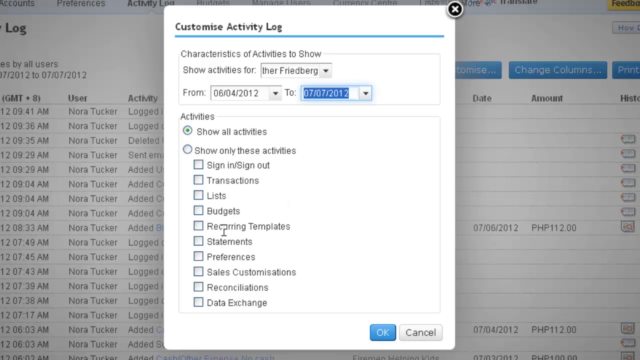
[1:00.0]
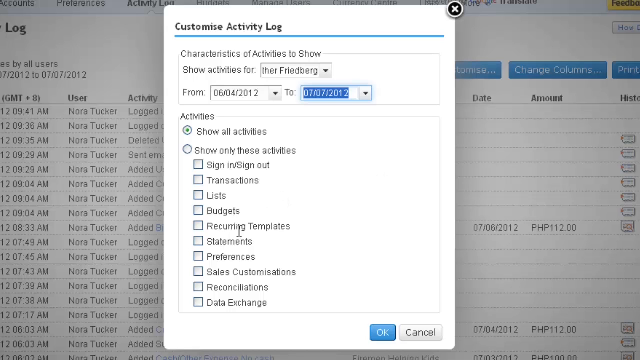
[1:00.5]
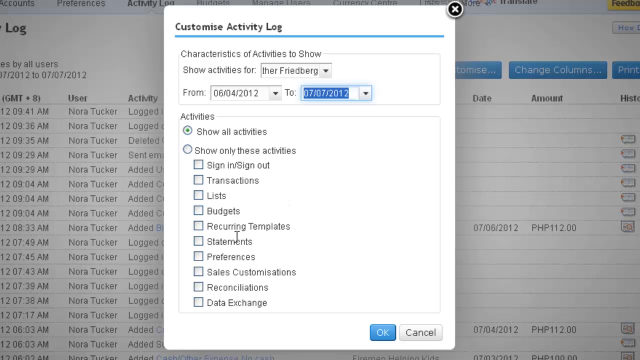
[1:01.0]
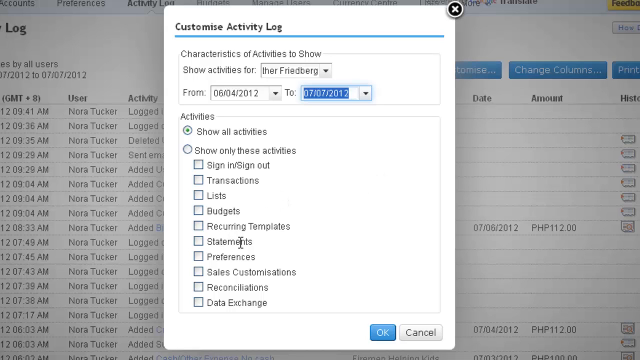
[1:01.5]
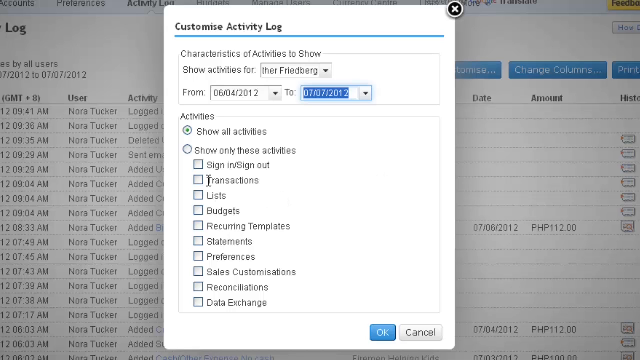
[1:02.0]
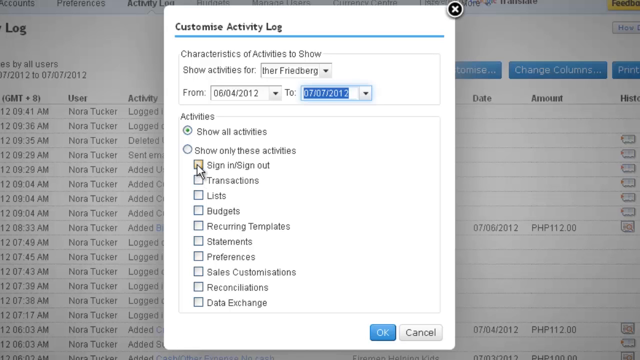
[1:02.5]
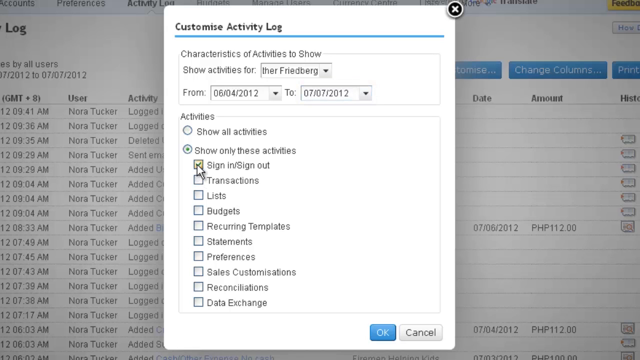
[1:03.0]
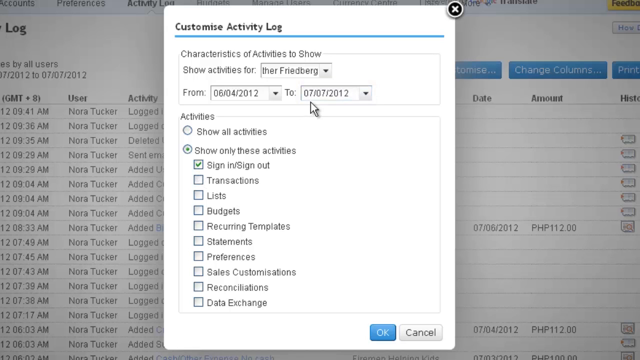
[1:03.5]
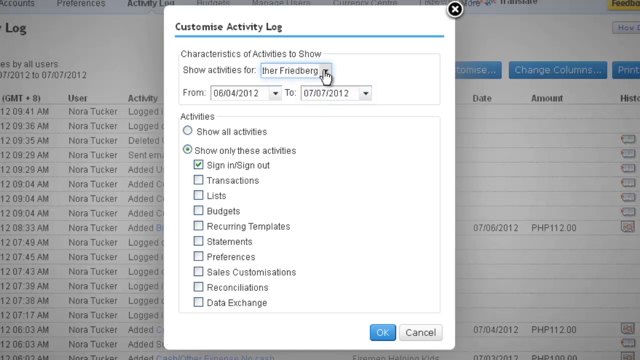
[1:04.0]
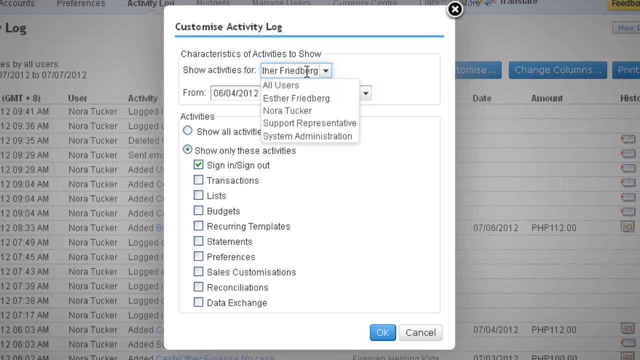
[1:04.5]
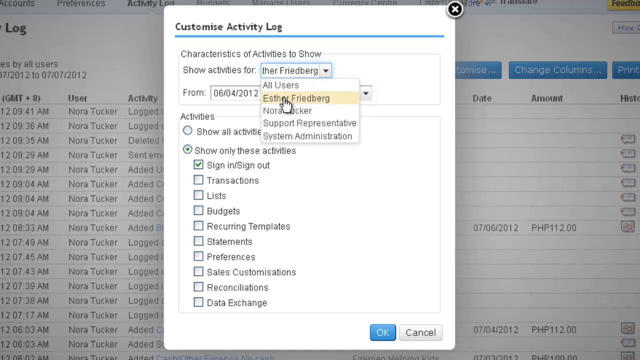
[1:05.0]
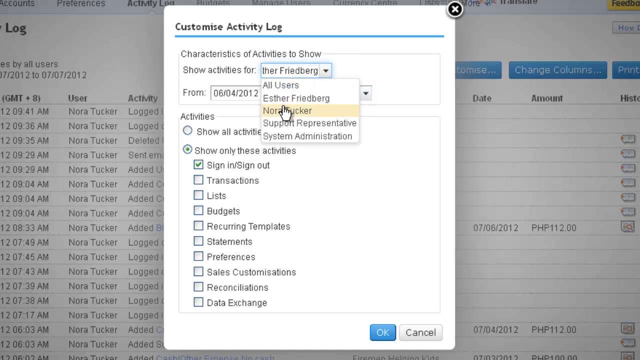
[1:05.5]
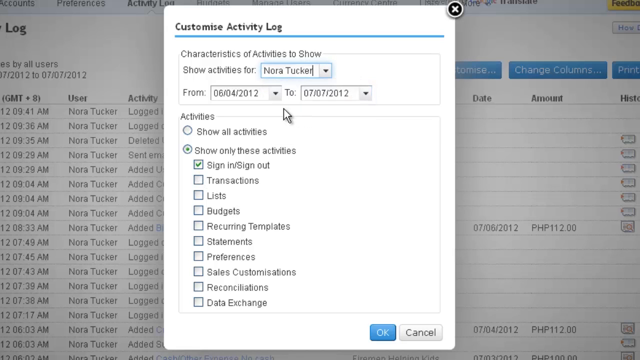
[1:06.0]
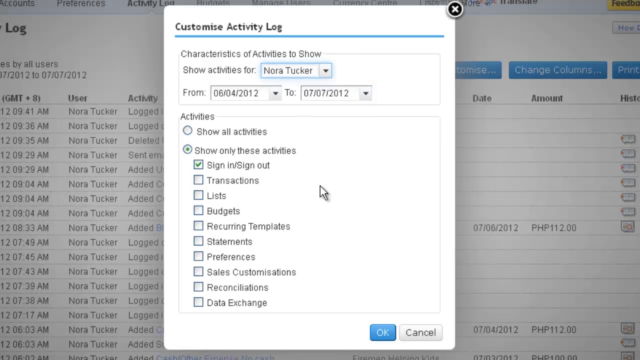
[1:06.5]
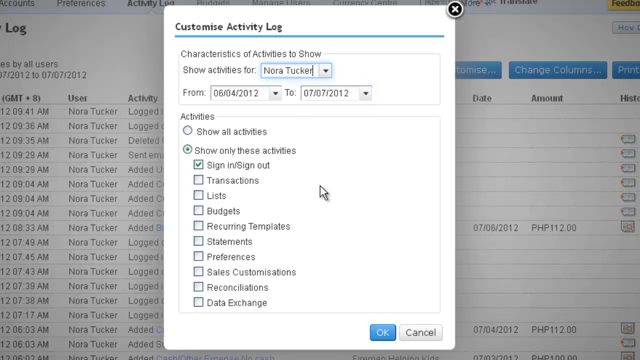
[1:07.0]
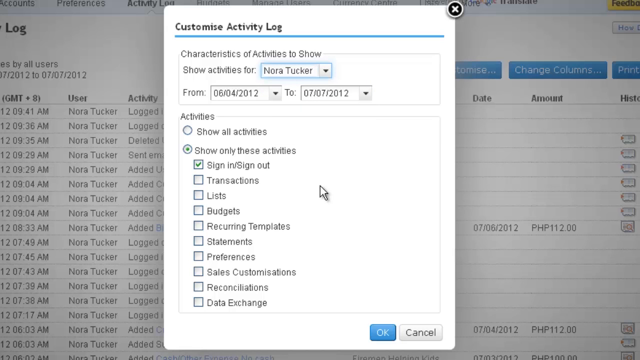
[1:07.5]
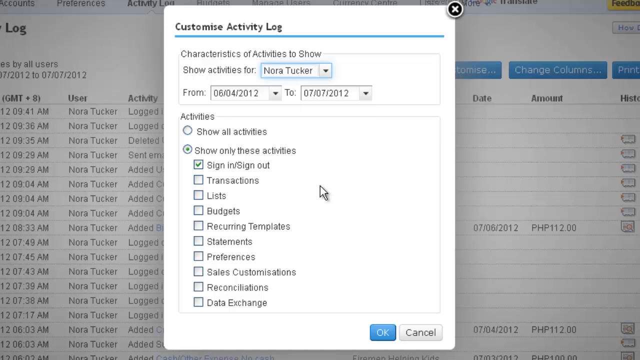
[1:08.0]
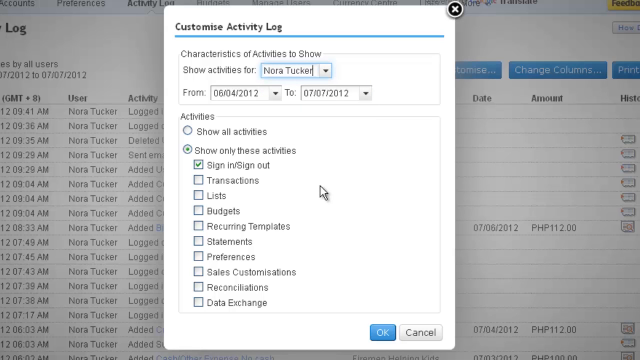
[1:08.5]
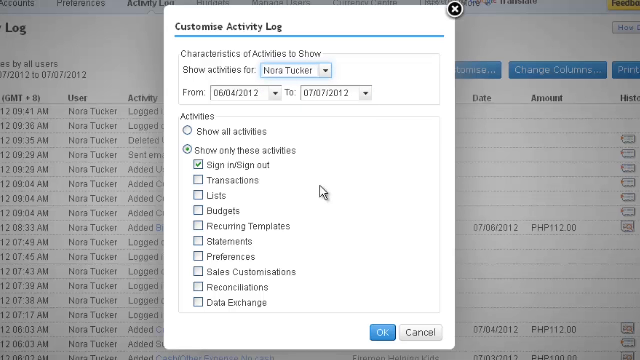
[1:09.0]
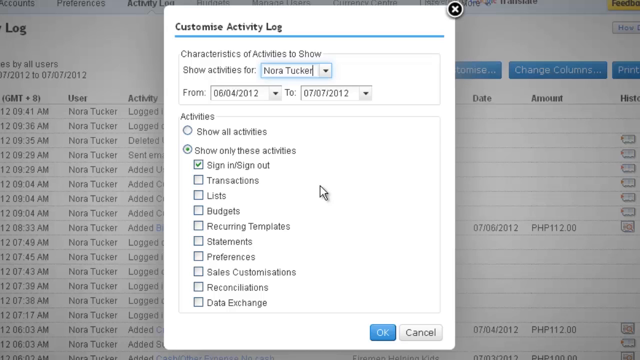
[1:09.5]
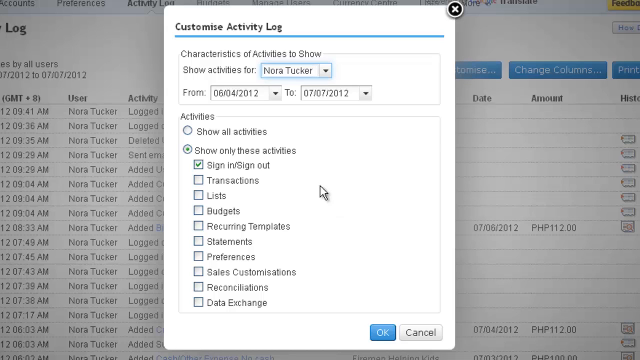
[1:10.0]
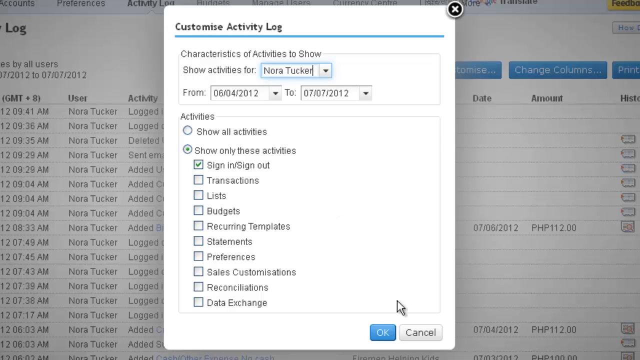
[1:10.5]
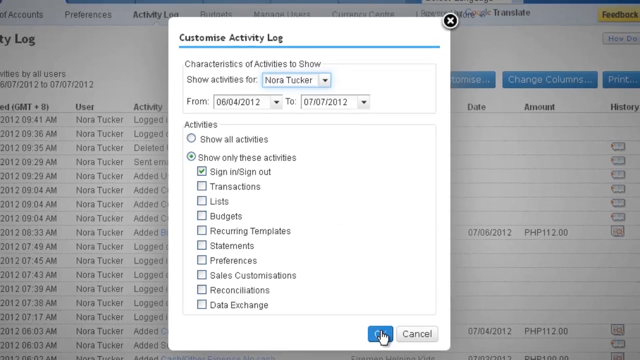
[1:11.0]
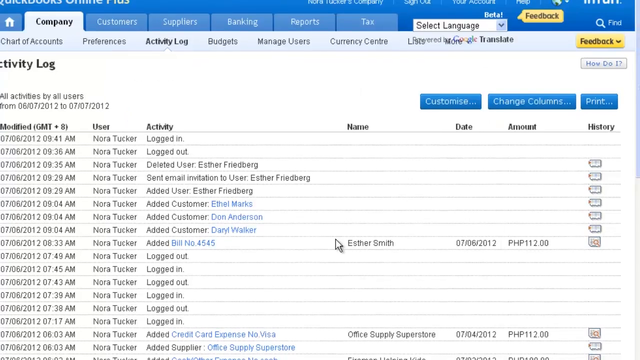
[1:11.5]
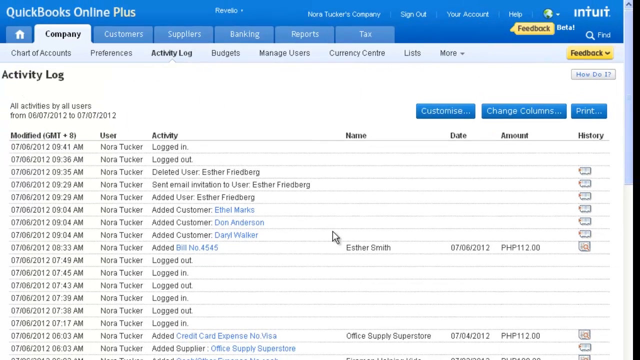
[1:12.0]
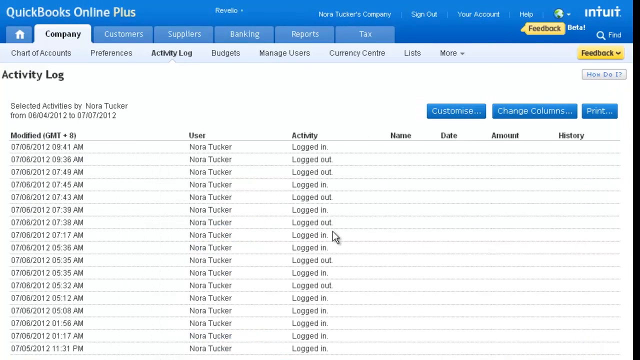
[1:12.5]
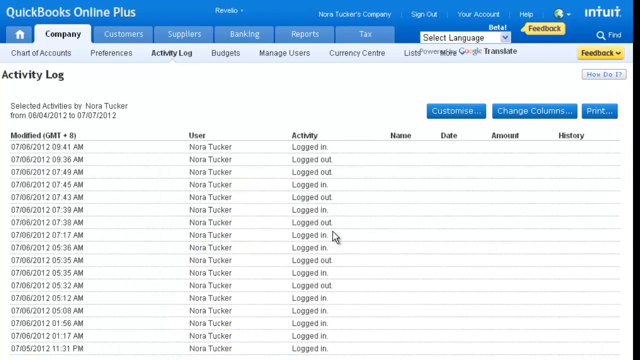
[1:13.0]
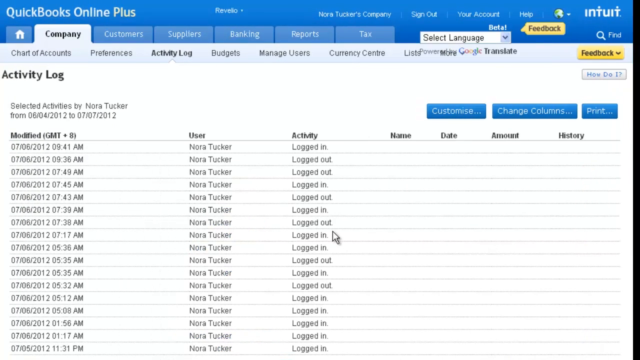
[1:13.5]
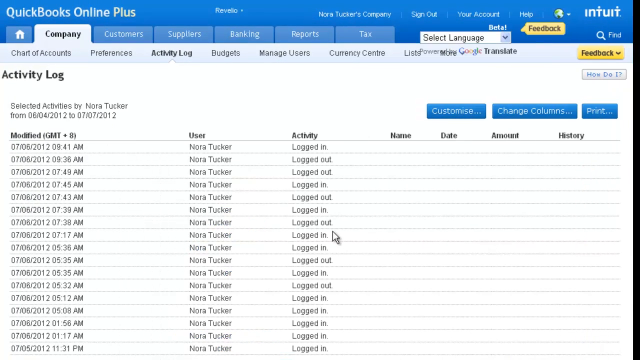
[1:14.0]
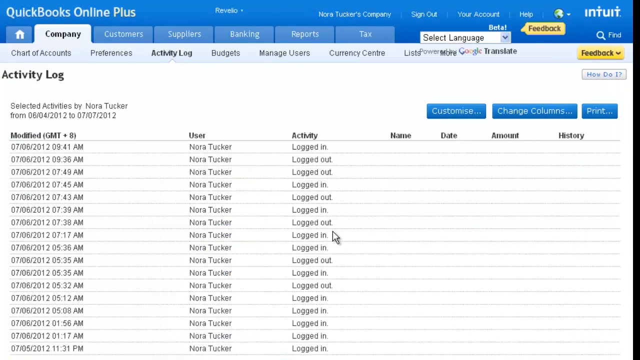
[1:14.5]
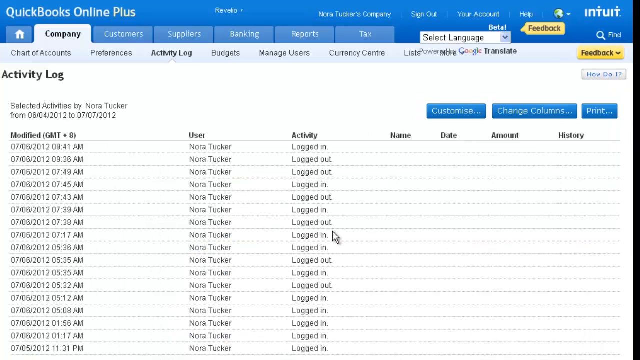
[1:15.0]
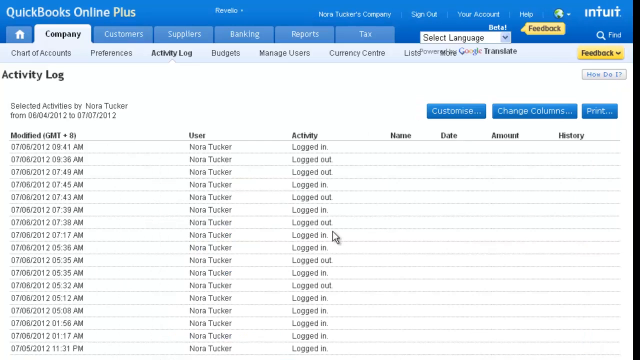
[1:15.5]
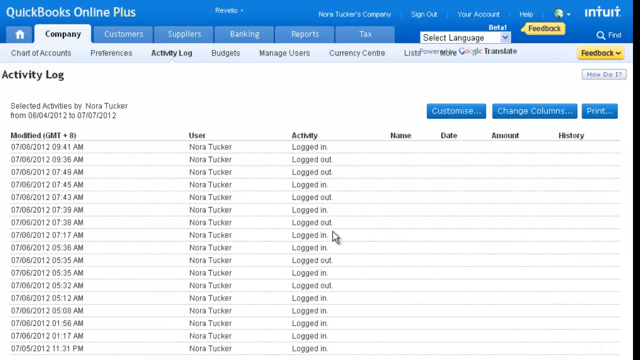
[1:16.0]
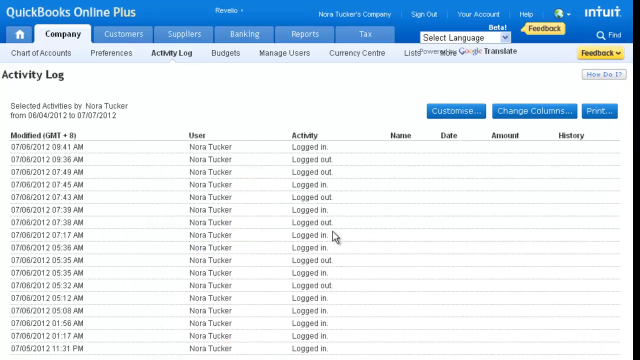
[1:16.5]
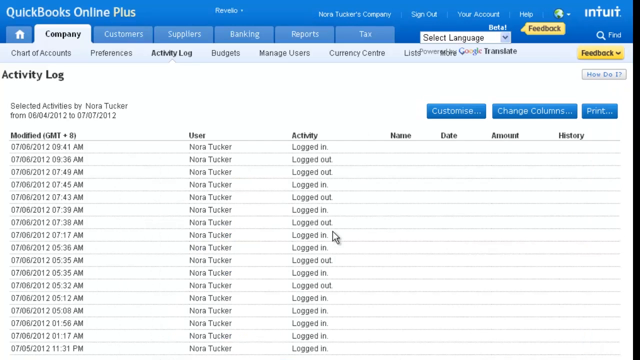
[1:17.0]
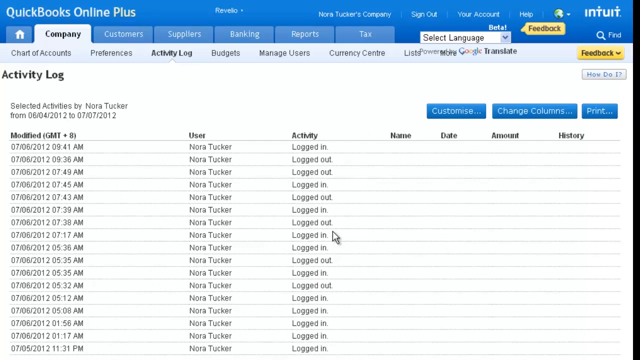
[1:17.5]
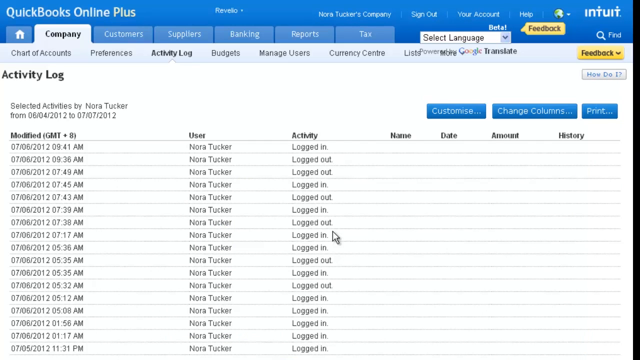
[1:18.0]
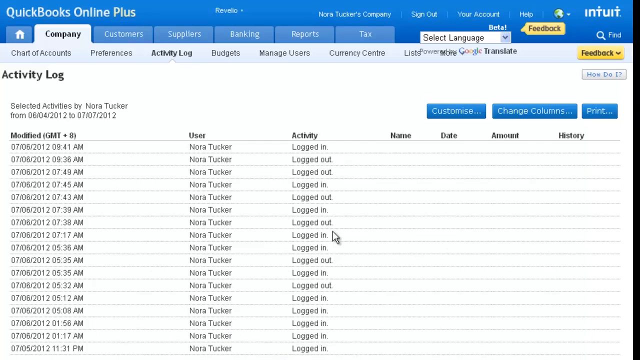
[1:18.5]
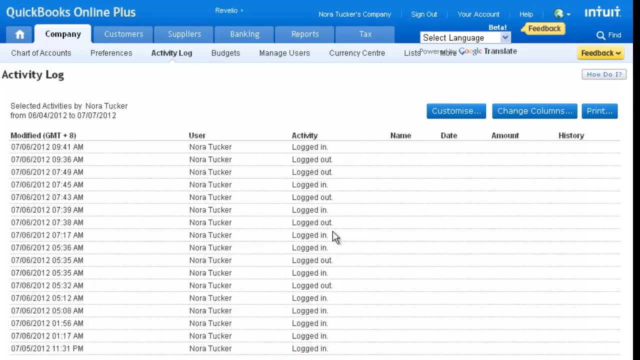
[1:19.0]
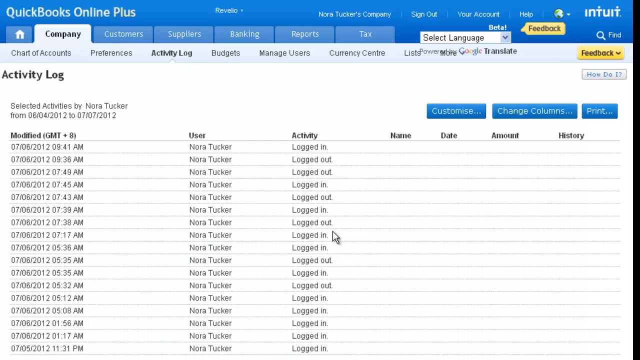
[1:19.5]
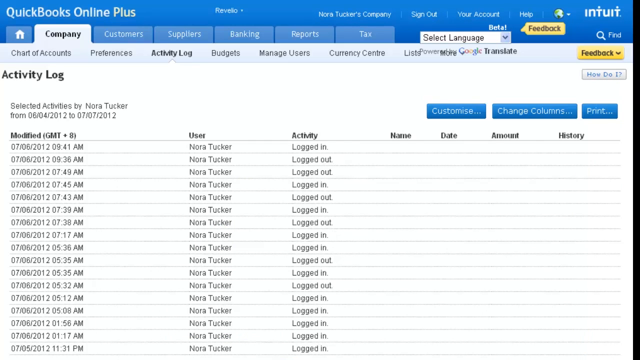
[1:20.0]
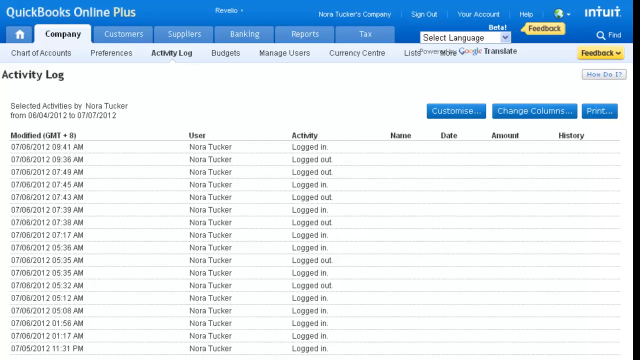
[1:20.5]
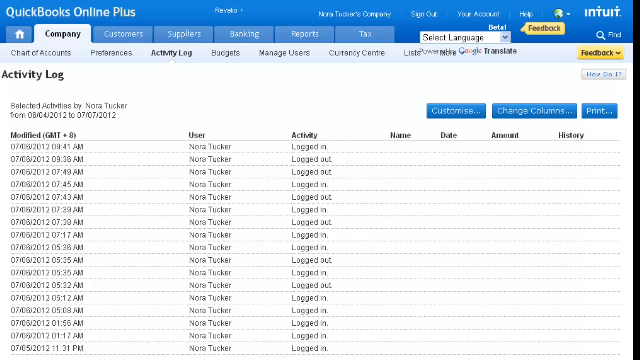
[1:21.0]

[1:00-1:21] The sign-in and sign-out activity for Nora Tucker is clicked, with a time frame set. The page then loads Nora Tucker's sign-in and sign-out activity within that time frame. The application keeps the same blue, business-looking appearance.